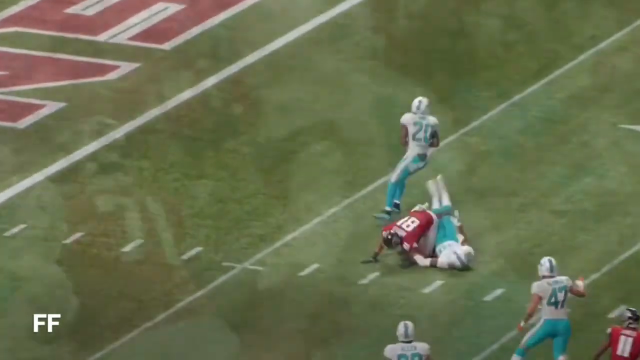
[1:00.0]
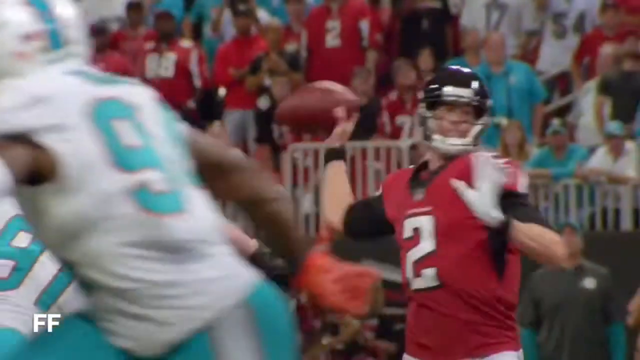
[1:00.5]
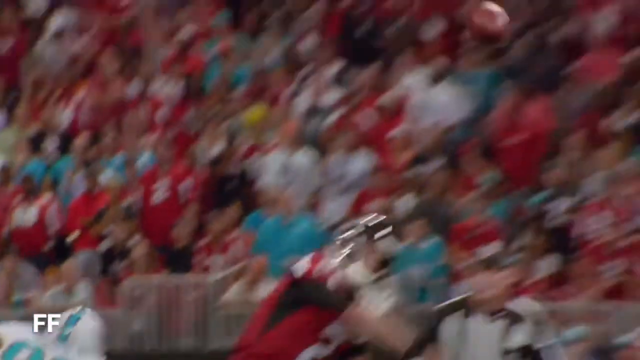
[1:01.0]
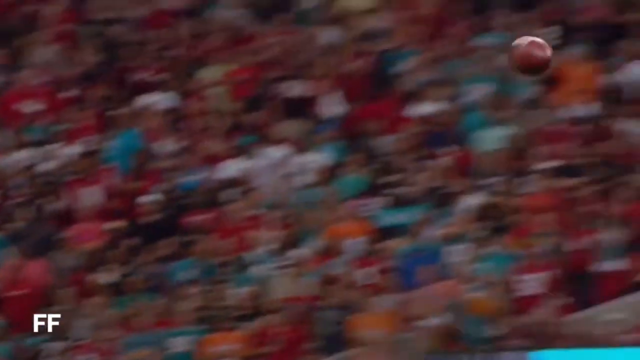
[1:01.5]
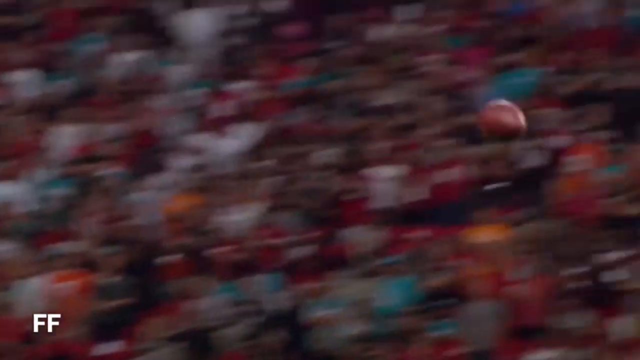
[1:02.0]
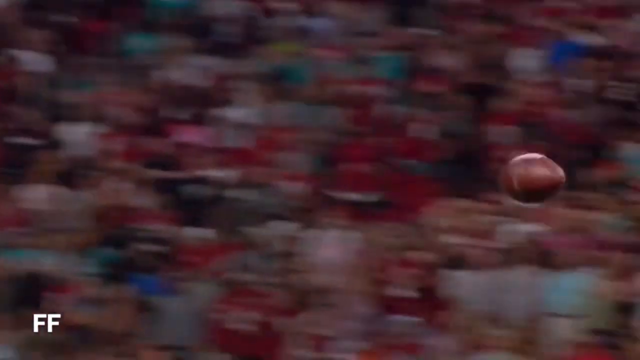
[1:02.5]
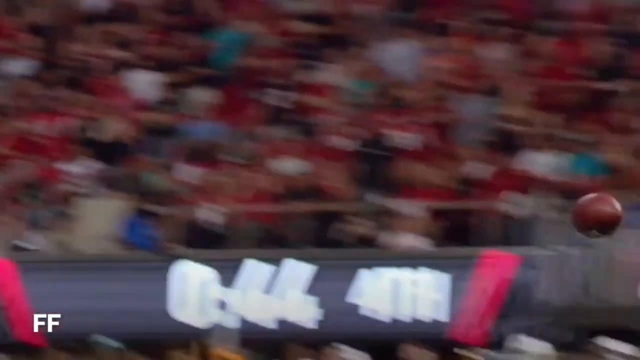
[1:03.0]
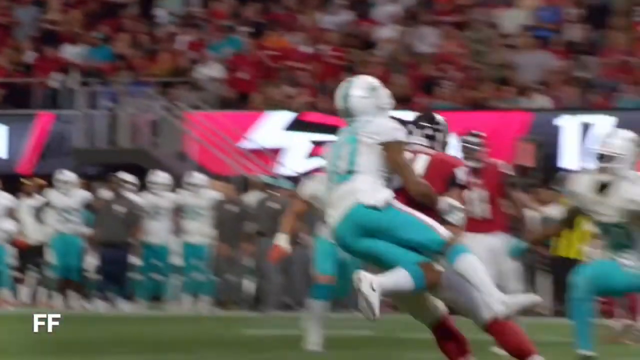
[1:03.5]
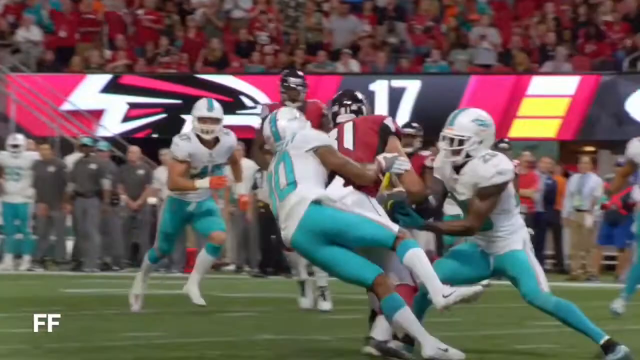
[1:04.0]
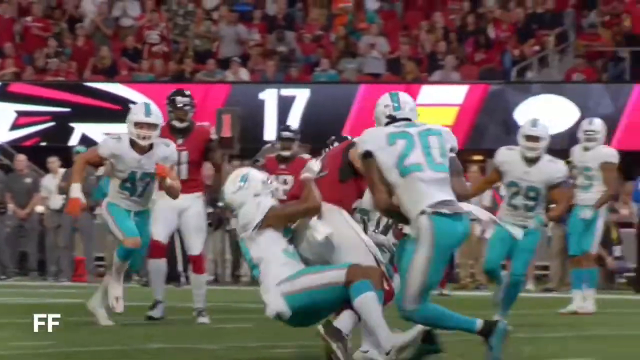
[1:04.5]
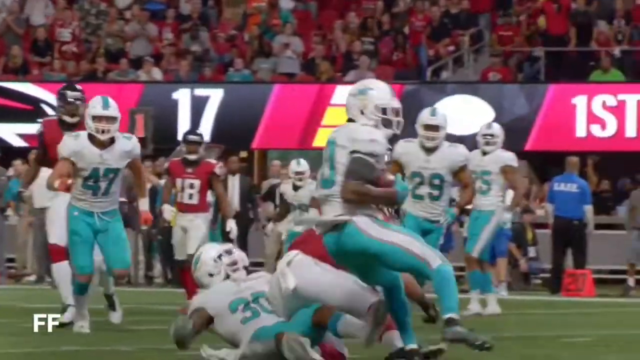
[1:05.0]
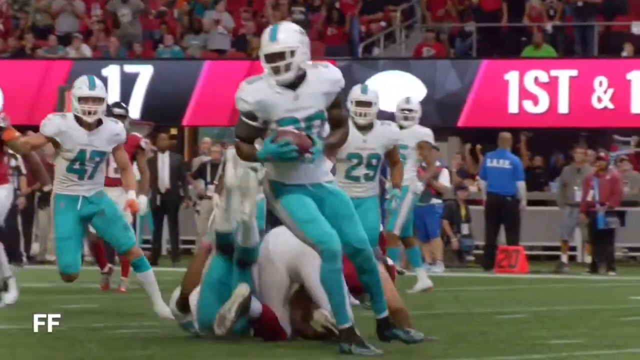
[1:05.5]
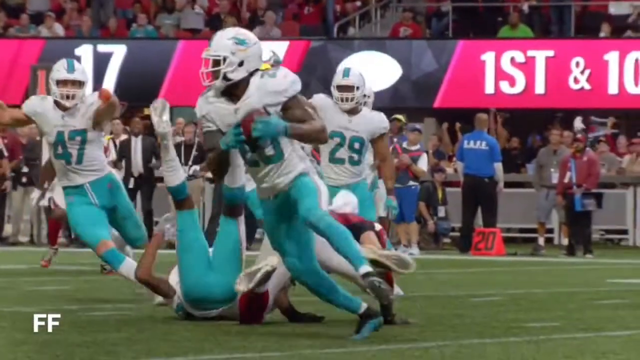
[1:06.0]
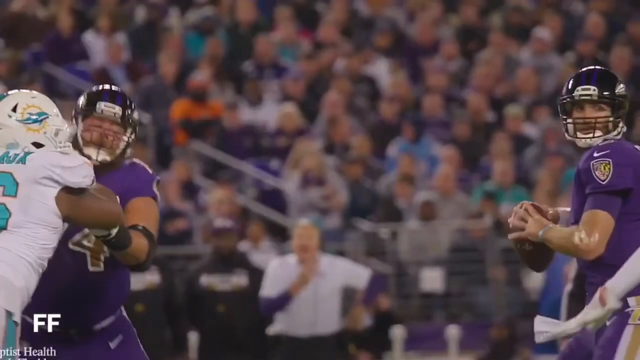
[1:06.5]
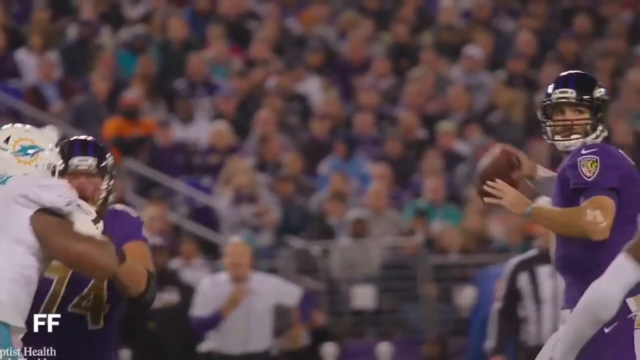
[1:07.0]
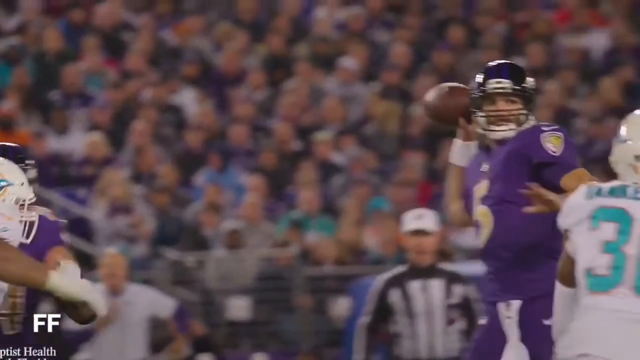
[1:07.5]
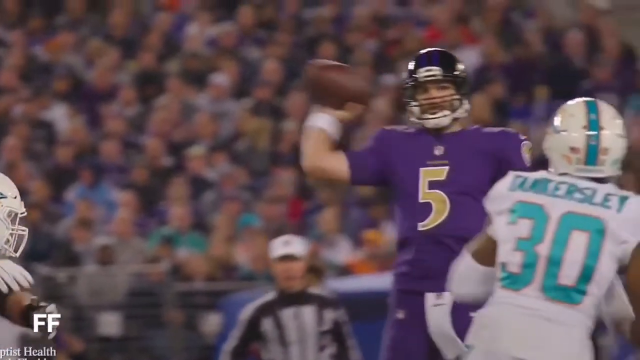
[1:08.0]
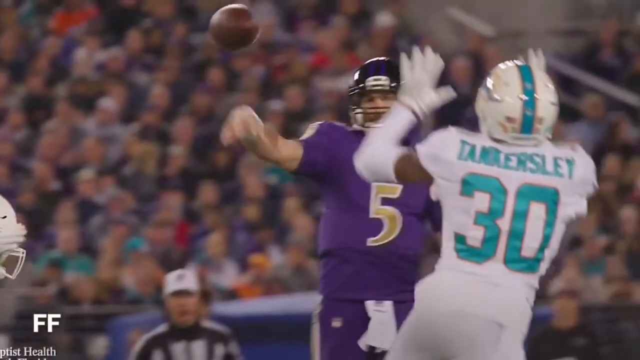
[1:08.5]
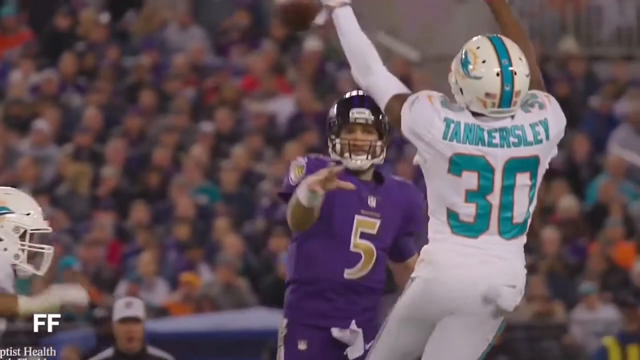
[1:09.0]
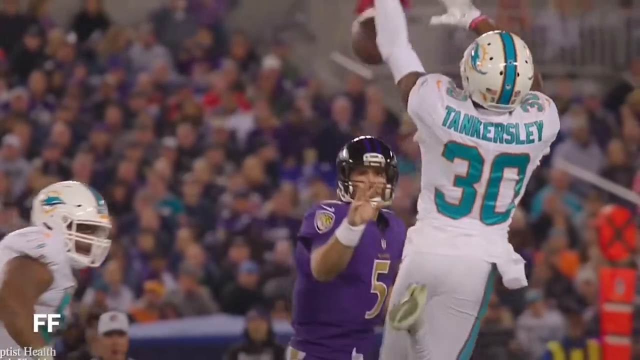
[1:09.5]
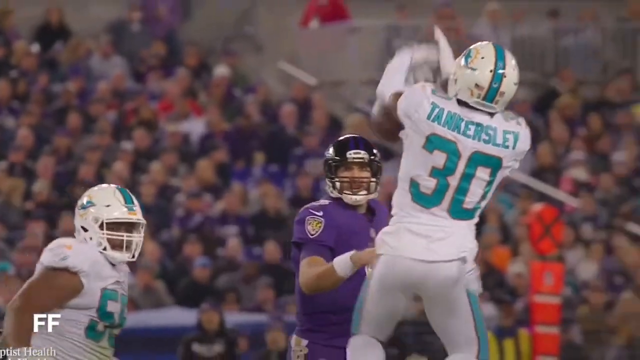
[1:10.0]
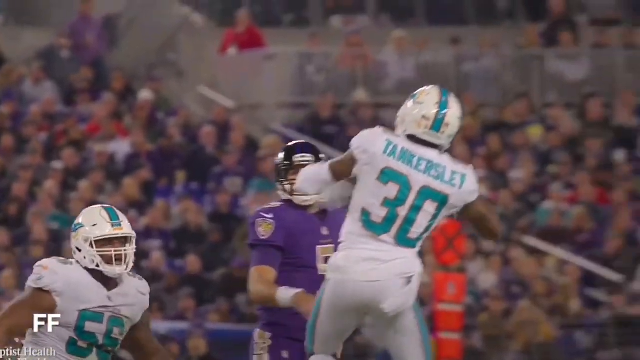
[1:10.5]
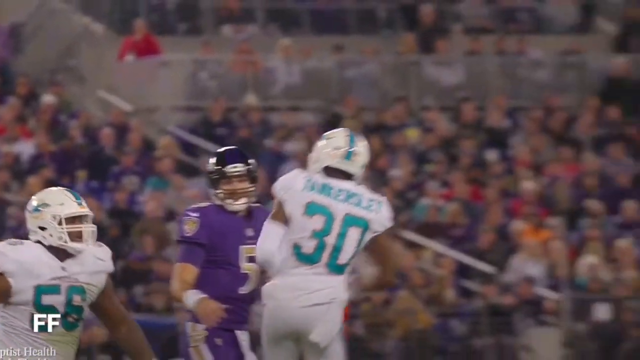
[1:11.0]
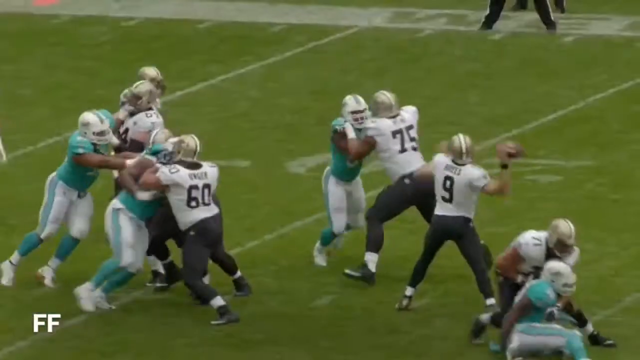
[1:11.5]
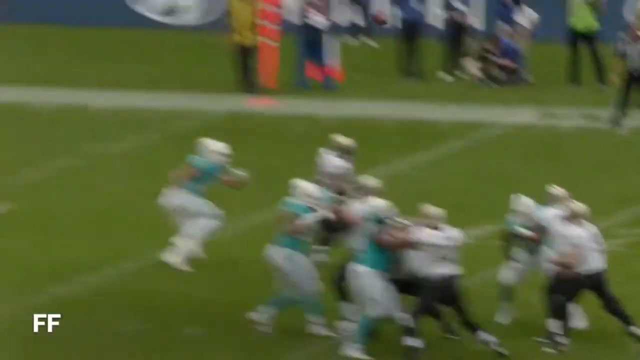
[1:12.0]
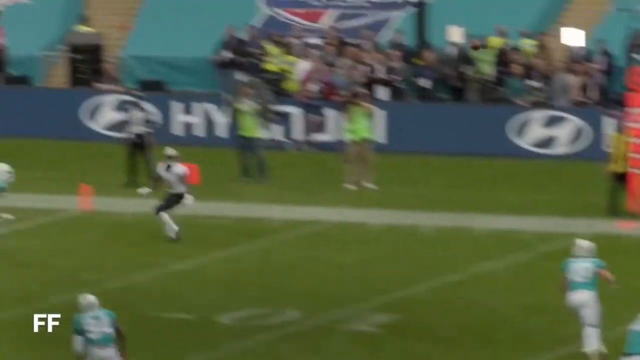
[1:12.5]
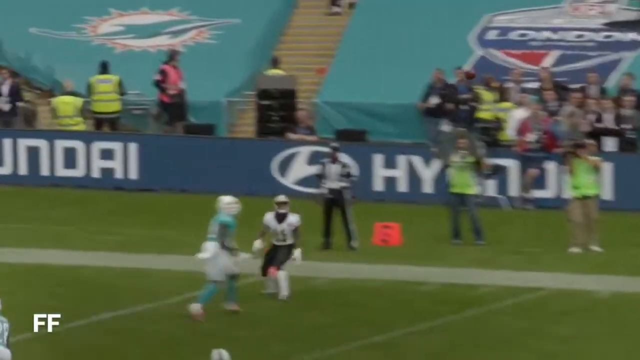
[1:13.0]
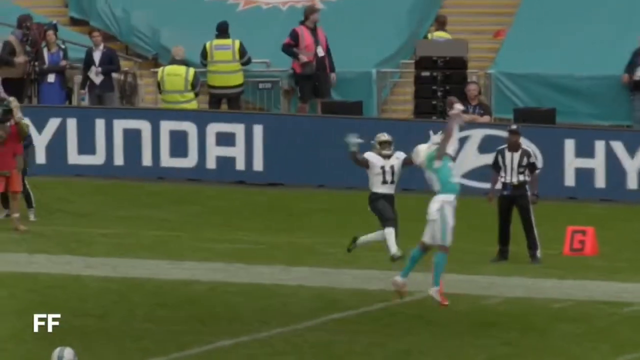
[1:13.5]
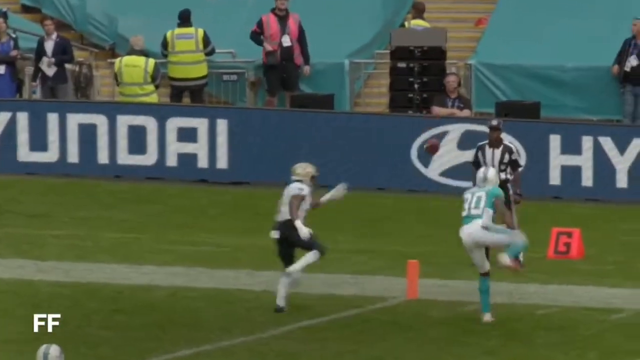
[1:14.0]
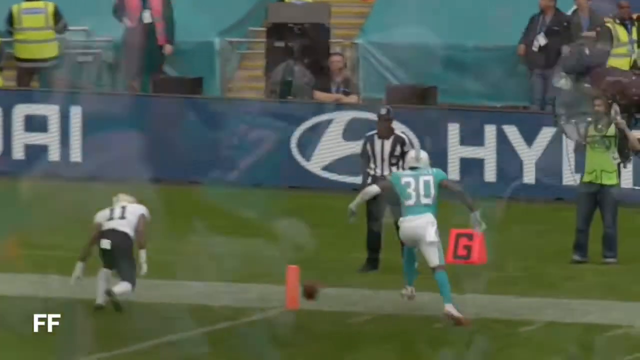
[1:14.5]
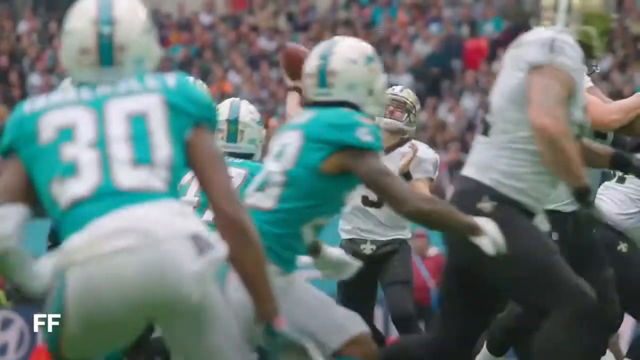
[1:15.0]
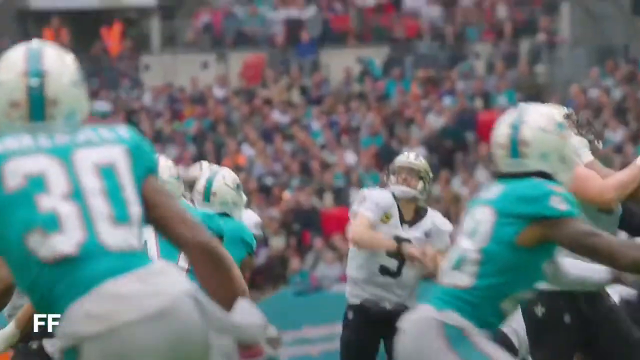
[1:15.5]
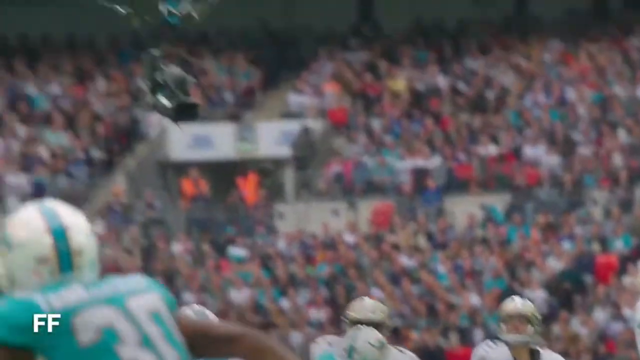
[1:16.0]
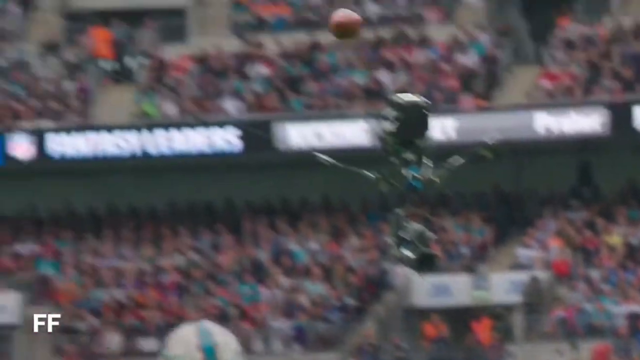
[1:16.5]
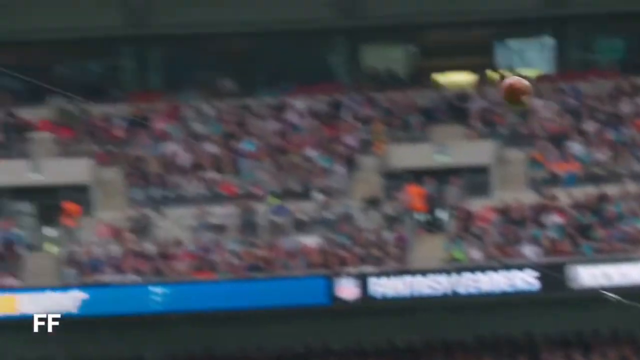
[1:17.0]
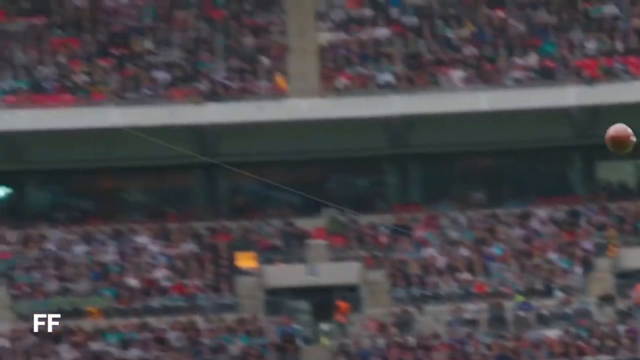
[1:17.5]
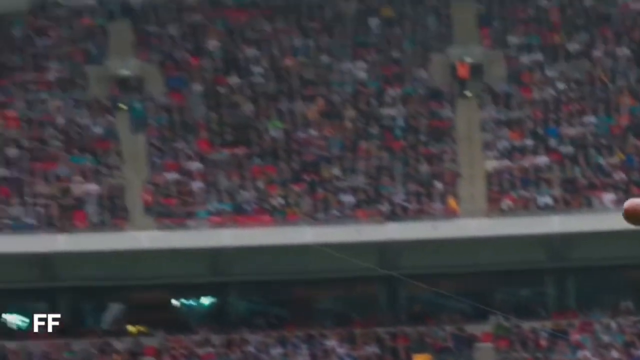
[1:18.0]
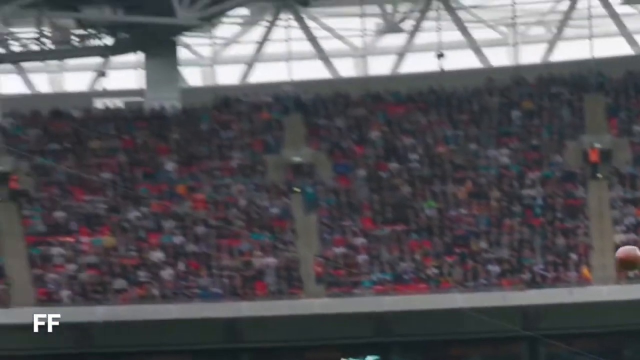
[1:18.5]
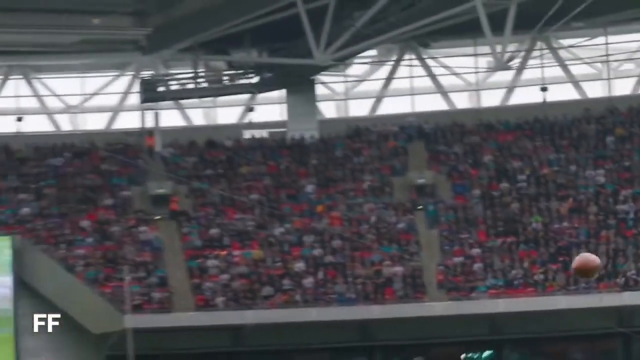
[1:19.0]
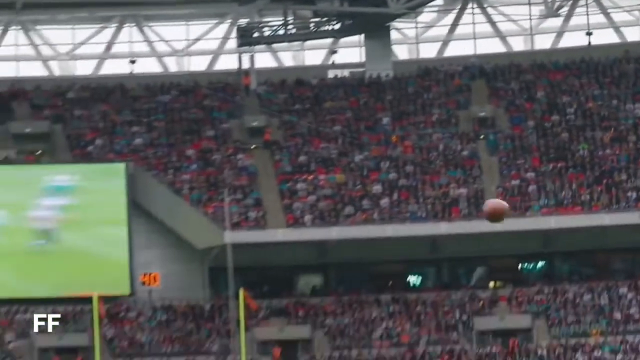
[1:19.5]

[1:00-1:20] Player number 2 throws the ball toward player number 81. Next, player number 5 in purple is intercepted by someone apparently called Tankersley, number 30, who seems to be playing for the Miami Dolphins. The stadium is very busy and very high, with lots of fans, and it has a screen inside for showing highlights and replays.